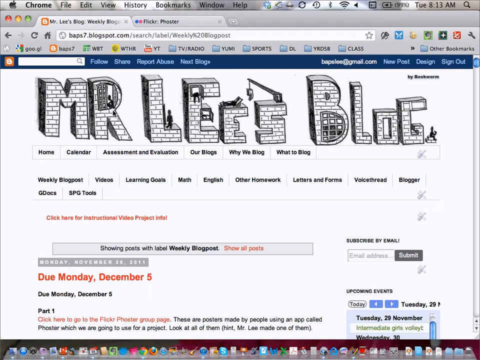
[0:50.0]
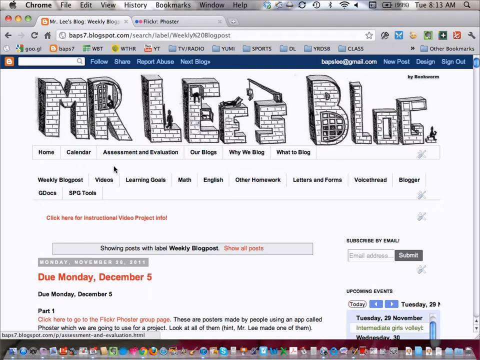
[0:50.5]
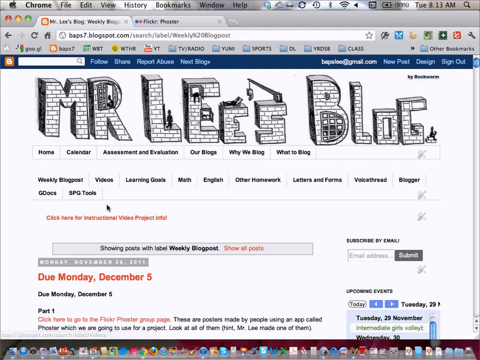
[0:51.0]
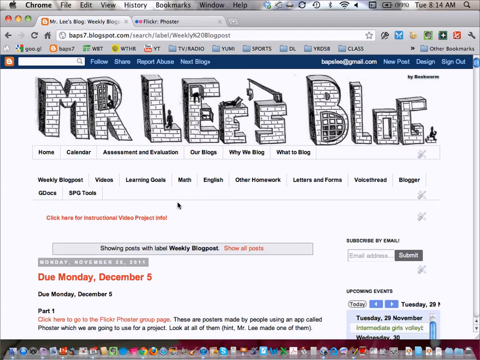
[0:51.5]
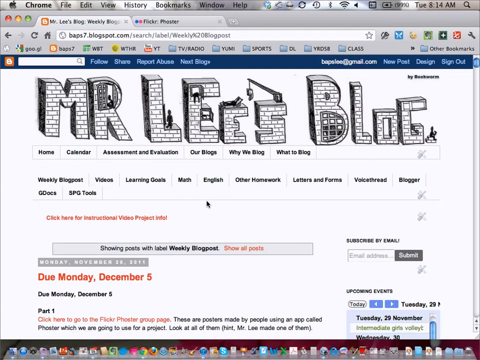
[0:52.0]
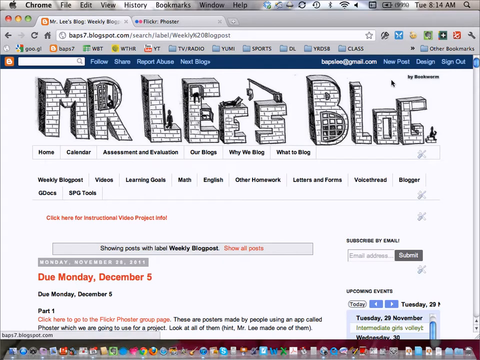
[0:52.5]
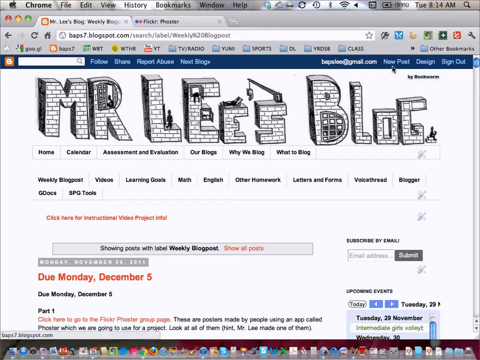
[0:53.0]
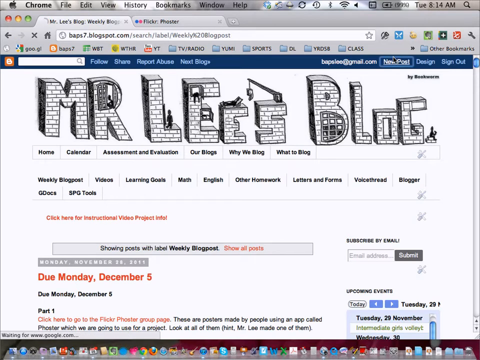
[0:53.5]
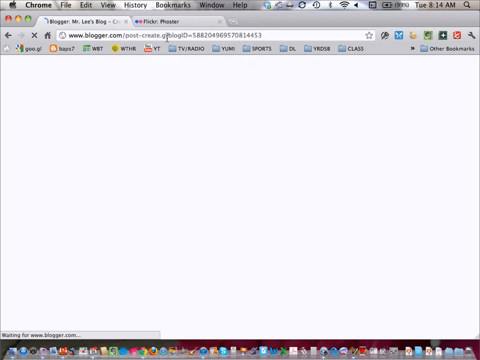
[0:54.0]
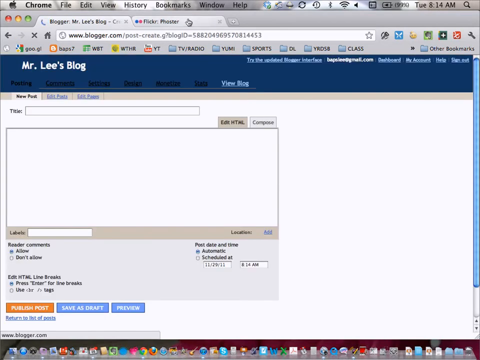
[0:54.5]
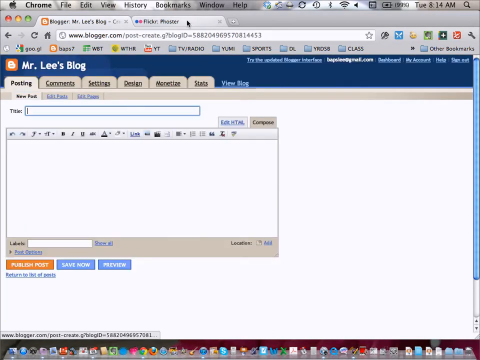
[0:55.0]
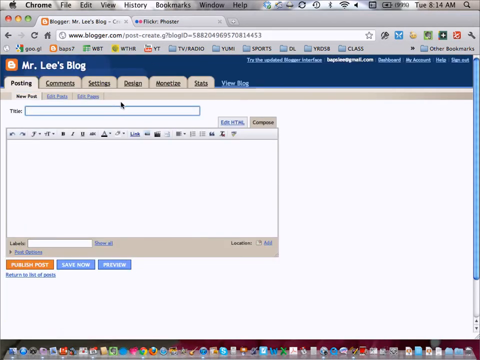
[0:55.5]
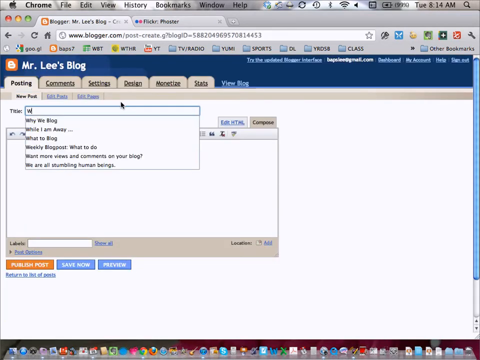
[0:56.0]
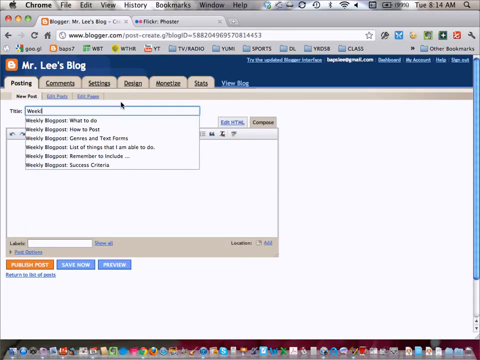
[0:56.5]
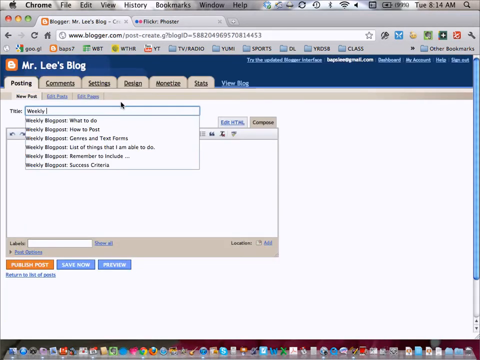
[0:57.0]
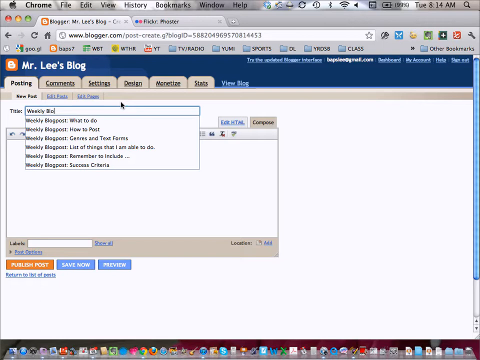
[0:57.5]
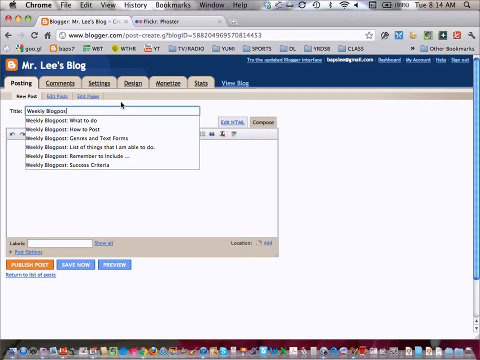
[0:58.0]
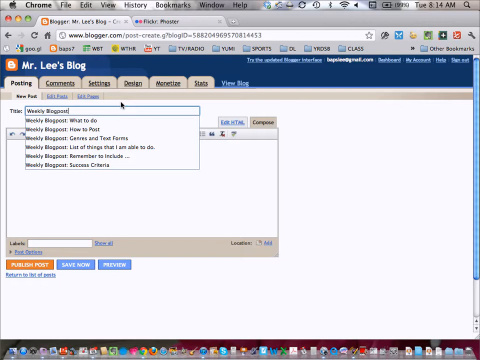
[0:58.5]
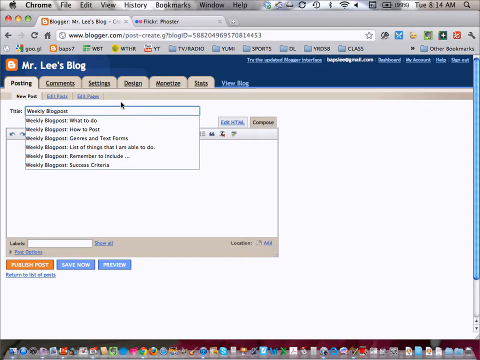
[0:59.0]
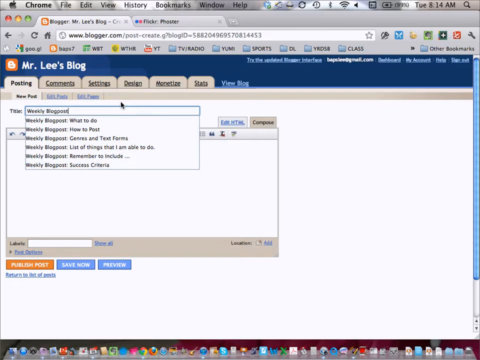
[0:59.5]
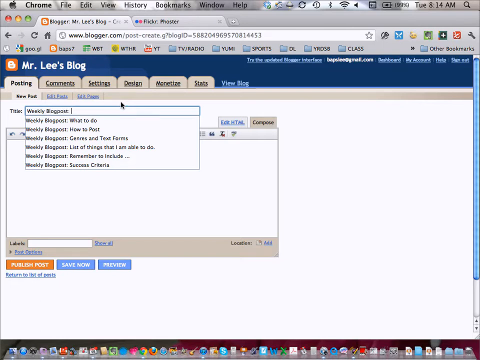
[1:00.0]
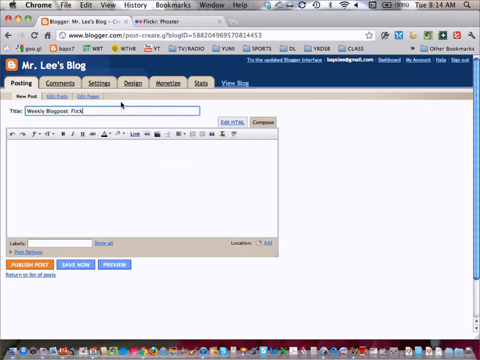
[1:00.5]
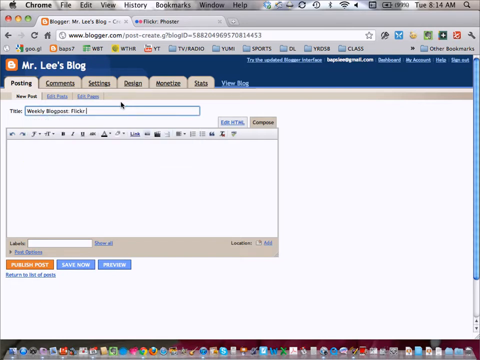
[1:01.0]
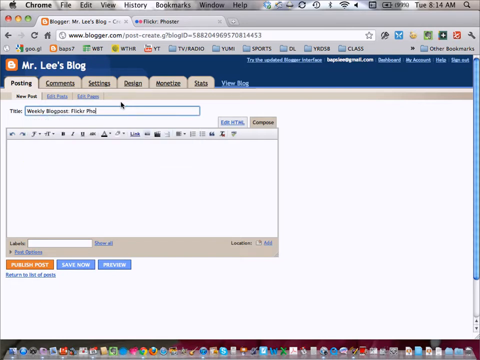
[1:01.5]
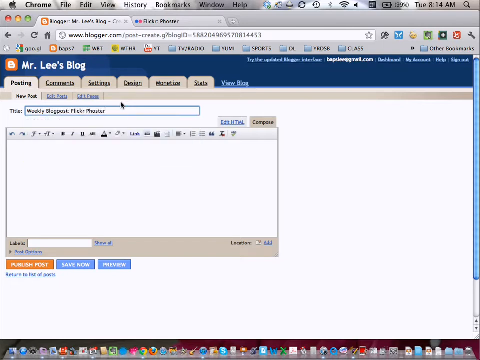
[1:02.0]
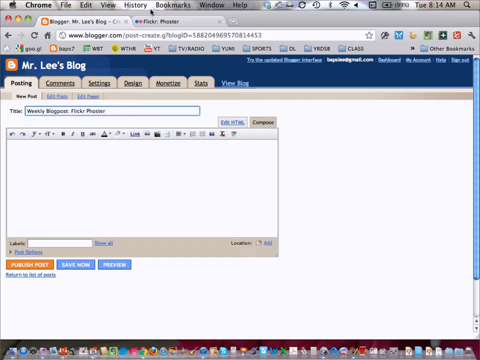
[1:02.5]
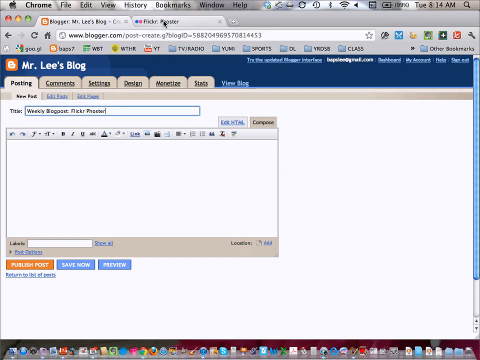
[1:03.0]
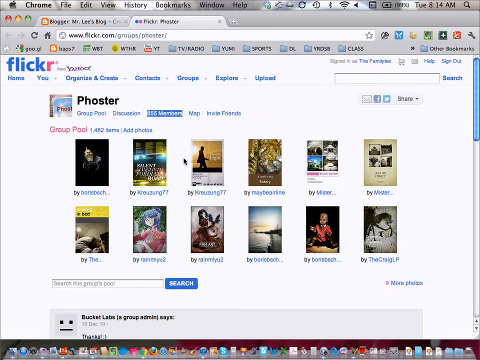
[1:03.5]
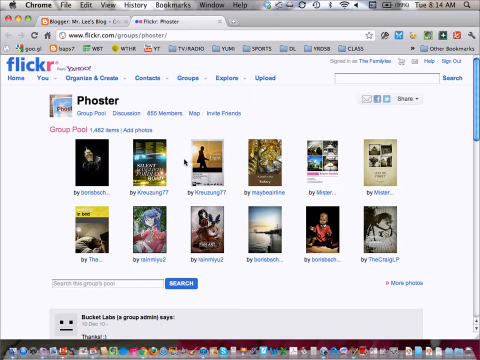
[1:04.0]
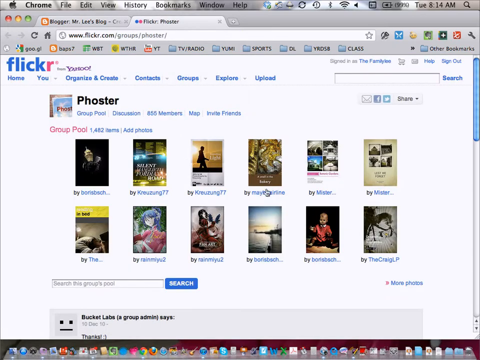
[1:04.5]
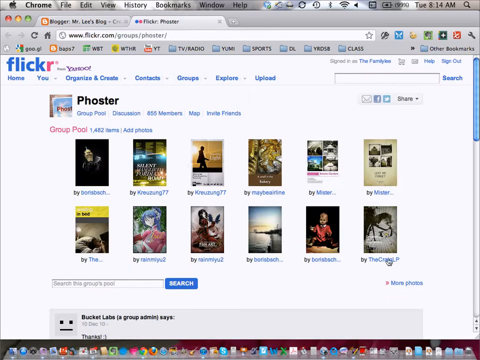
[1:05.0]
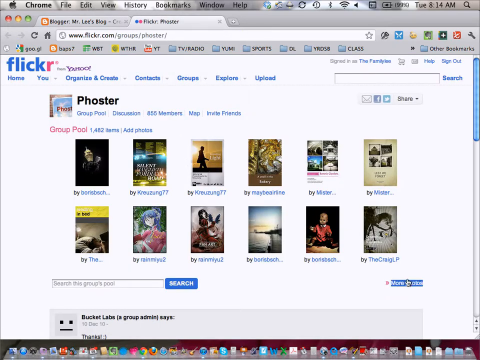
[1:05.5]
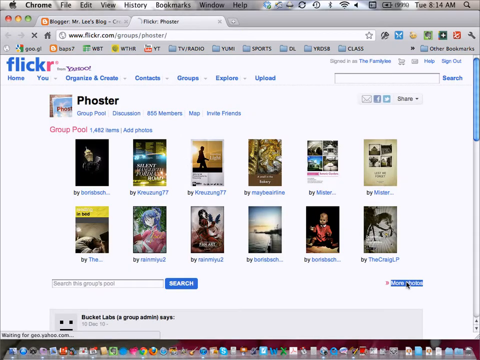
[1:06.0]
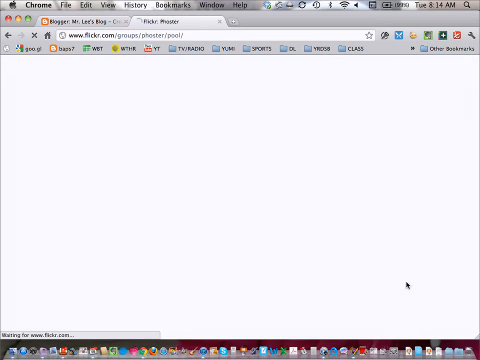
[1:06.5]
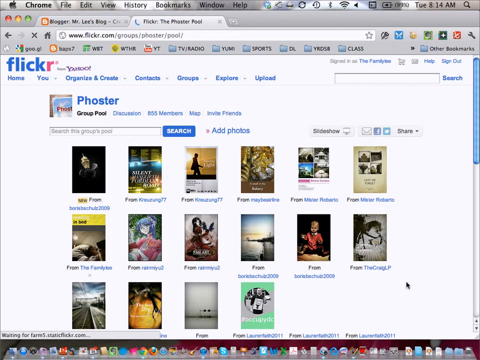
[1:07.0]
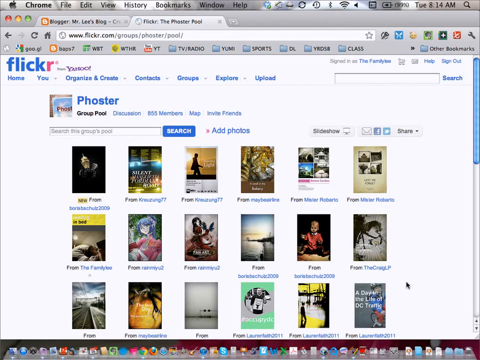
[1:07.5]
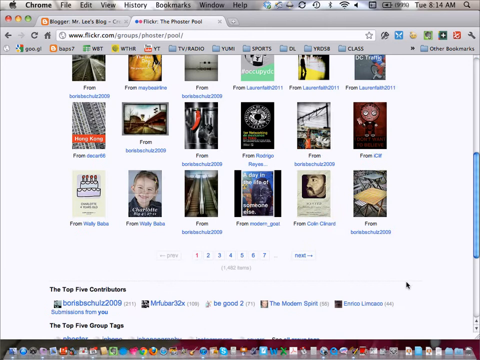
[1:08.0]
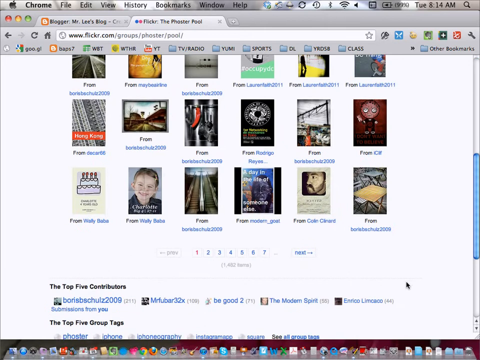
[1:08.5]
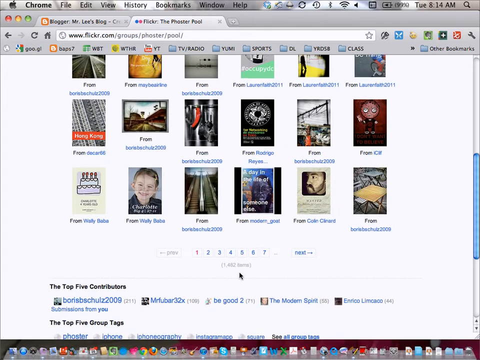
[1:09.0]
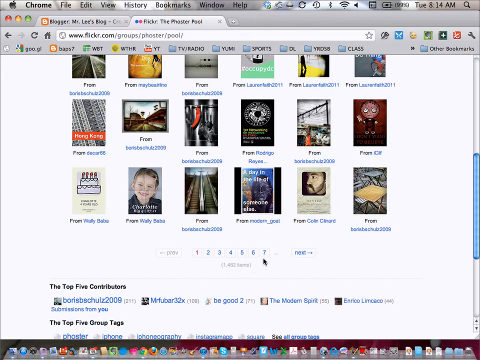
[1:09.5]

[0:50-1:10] The mouse cursor moves to the right-hand side of the top of the screen, to a button labeled "New Post" in white text on the dark blue Blogspot banner. Clicking it brings up a new page in the same tab, which is shown loading. Once loaded, the page has a large text box and, above it, a second text box titled "Title." The user types the title "Weekly Blog Post, Flickr Foster." They then click the second tab in the Chrome window, bringing back the Flickr.com page labeled "Foster," and click the "more photos" button in the bottom right corner. A new page opens with more of these picture widgets, and the video scrolls down through all of the pictures until reaching the end.